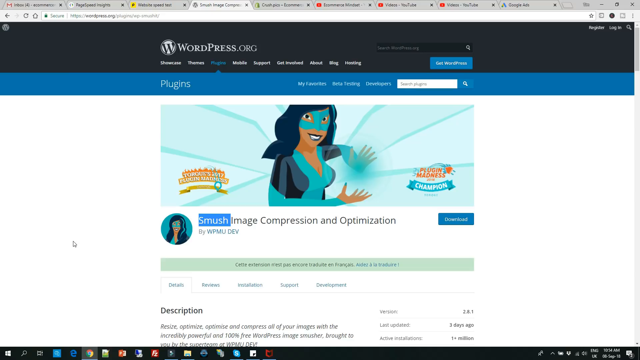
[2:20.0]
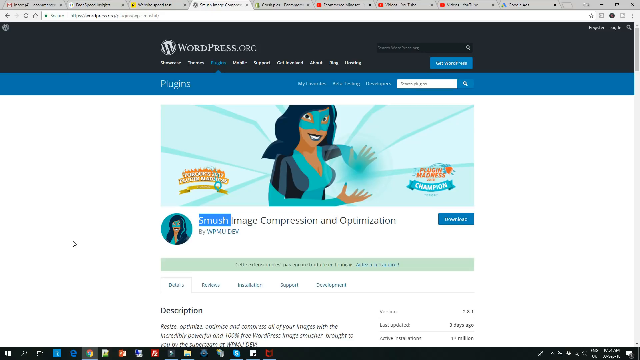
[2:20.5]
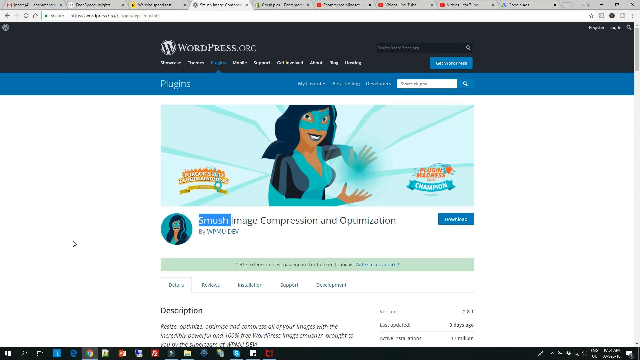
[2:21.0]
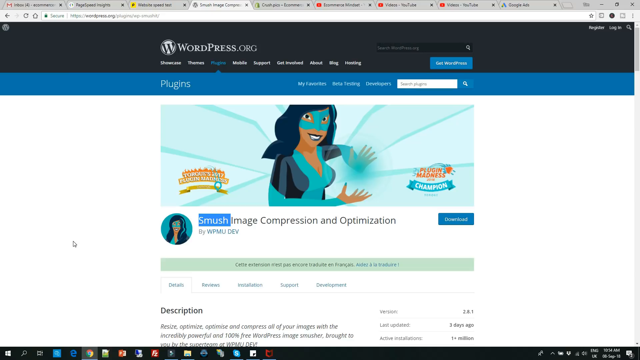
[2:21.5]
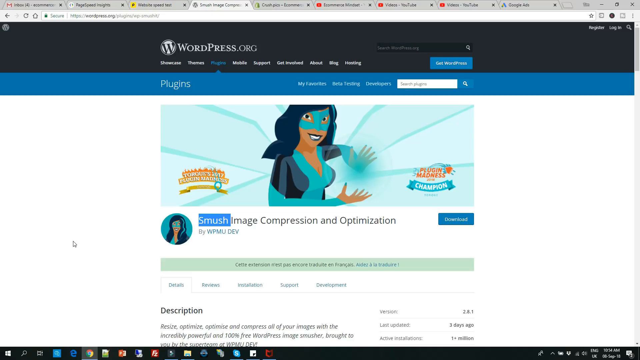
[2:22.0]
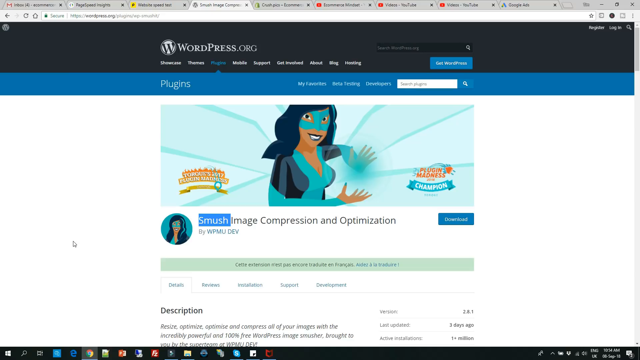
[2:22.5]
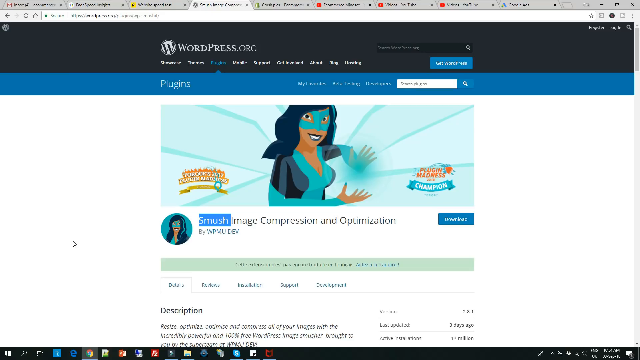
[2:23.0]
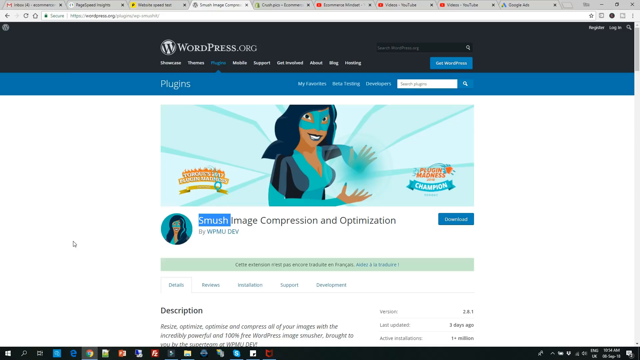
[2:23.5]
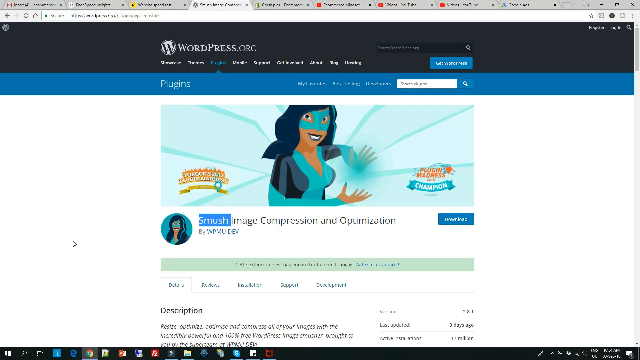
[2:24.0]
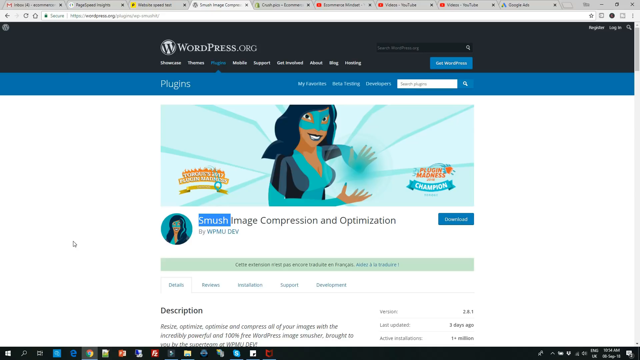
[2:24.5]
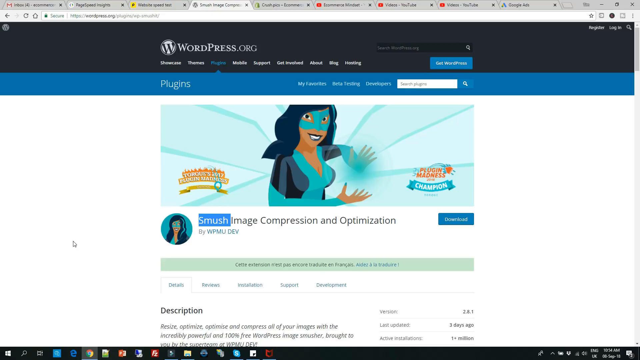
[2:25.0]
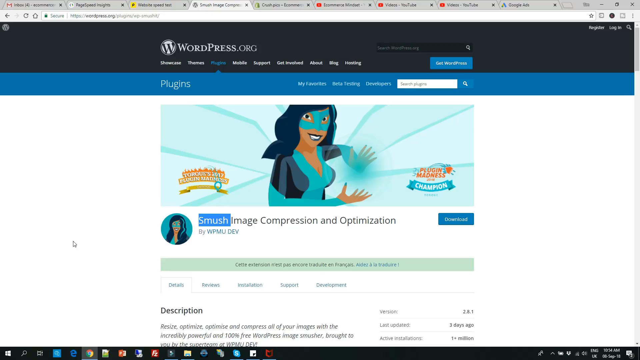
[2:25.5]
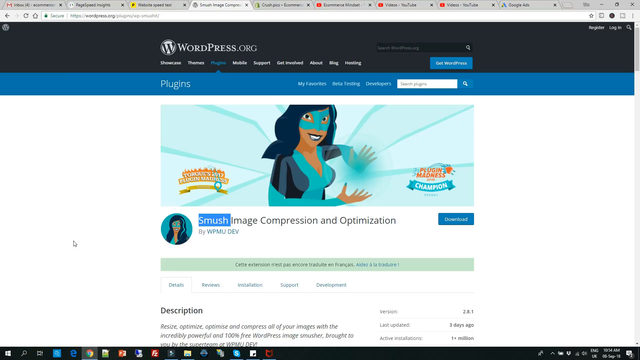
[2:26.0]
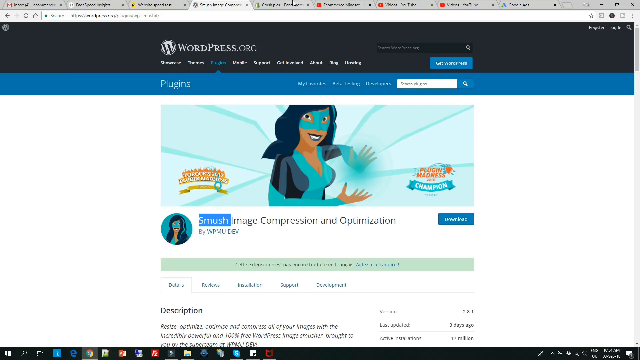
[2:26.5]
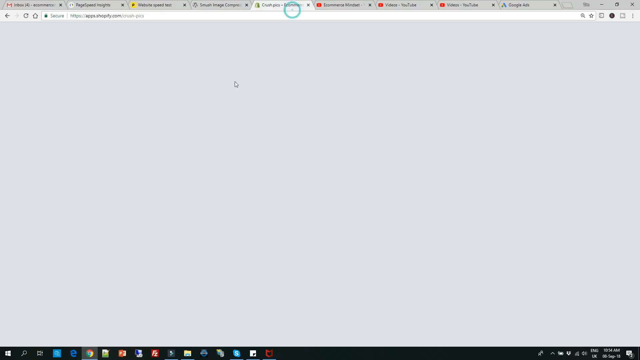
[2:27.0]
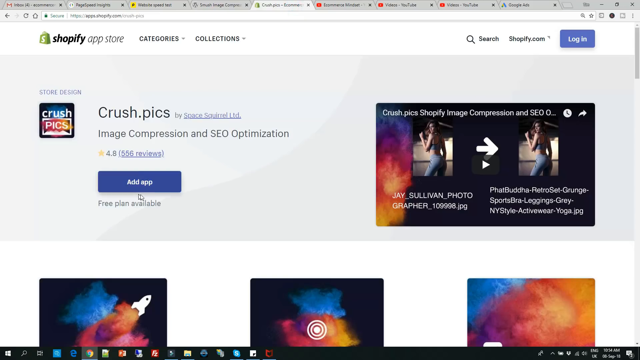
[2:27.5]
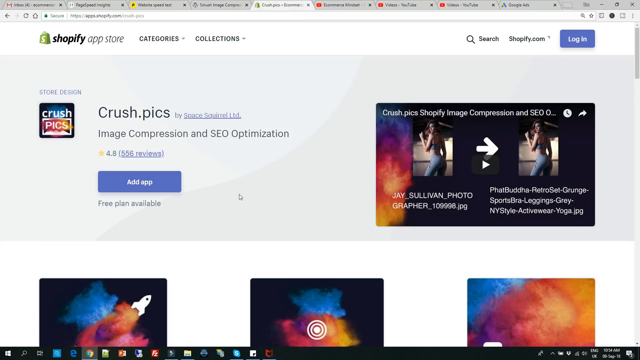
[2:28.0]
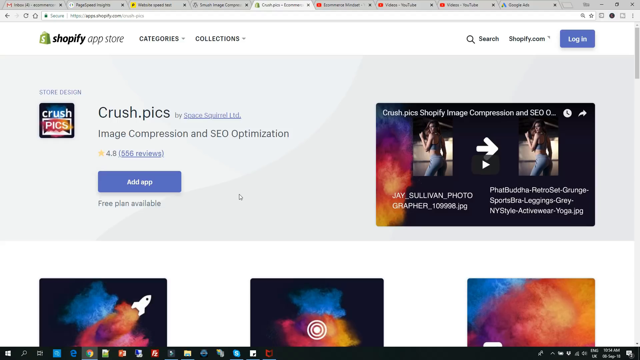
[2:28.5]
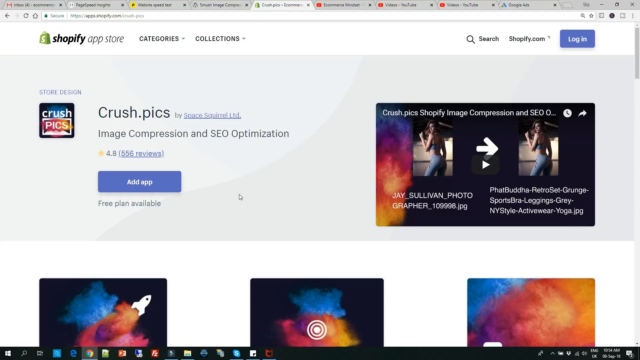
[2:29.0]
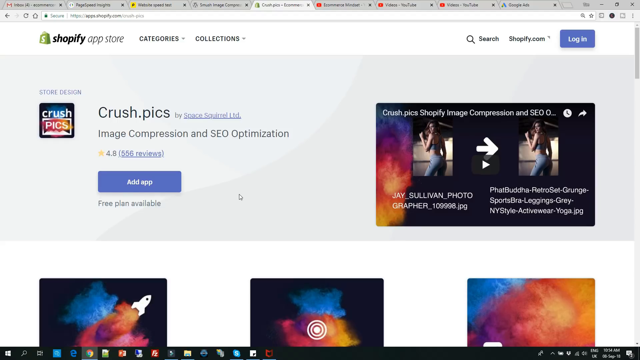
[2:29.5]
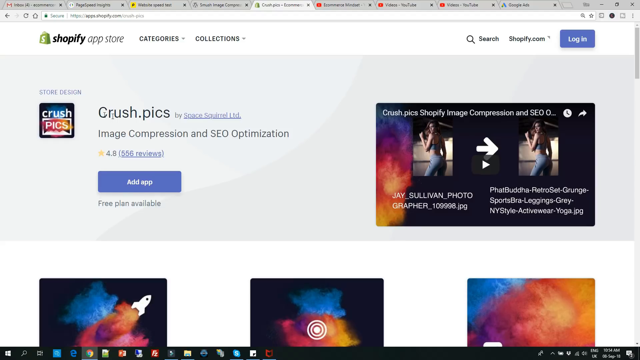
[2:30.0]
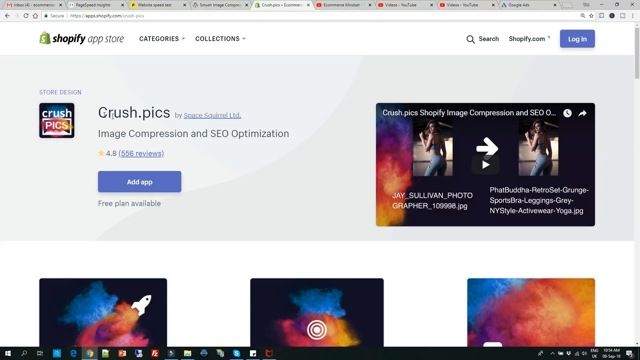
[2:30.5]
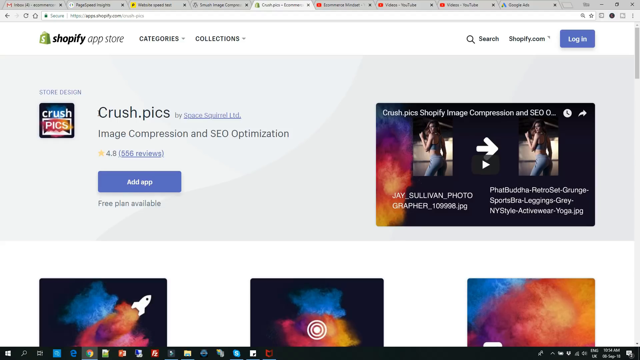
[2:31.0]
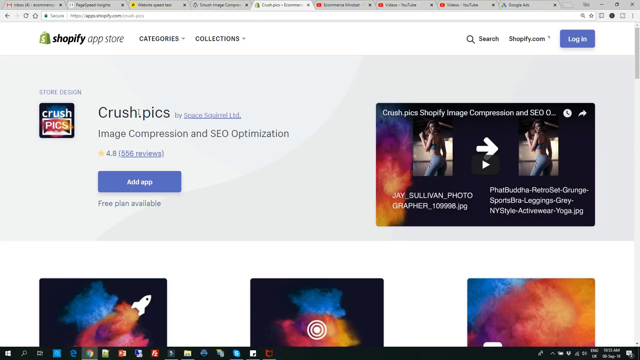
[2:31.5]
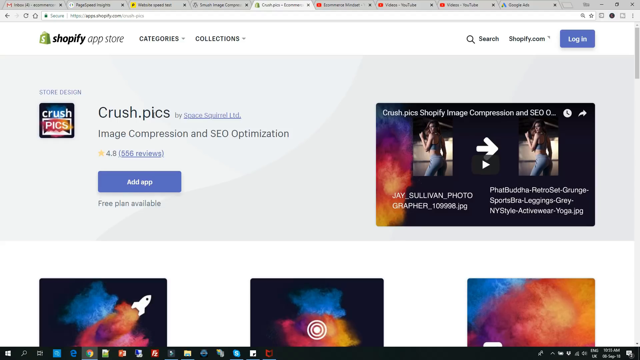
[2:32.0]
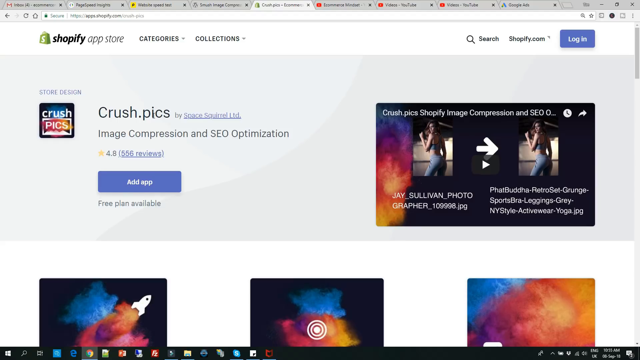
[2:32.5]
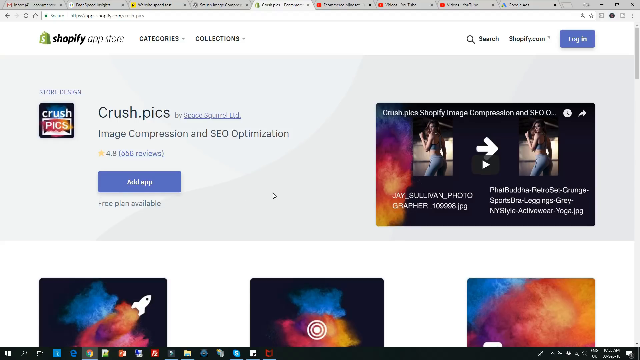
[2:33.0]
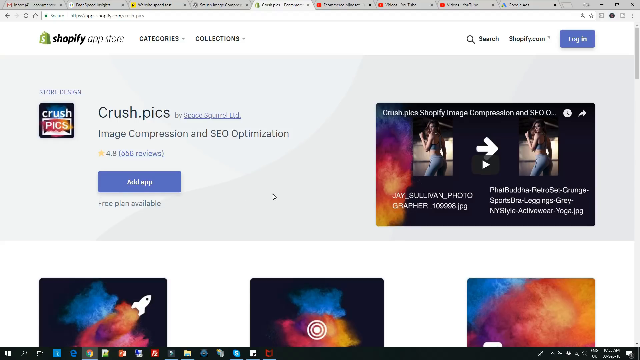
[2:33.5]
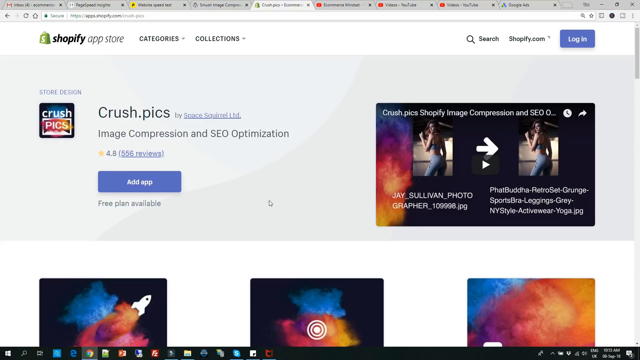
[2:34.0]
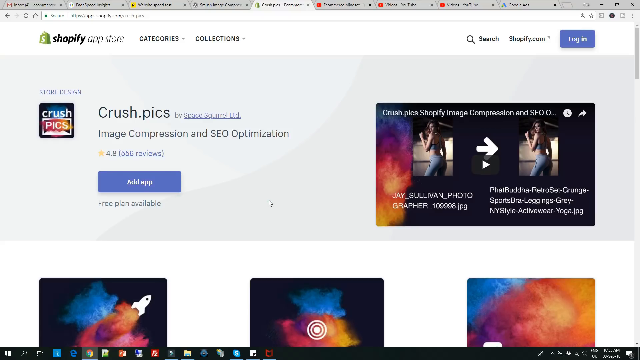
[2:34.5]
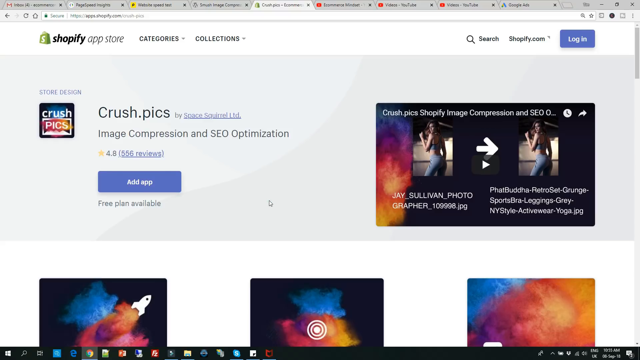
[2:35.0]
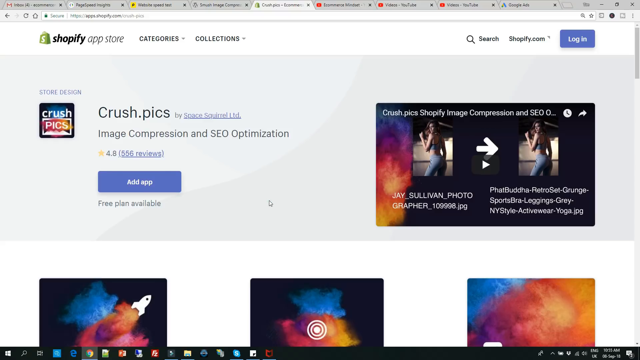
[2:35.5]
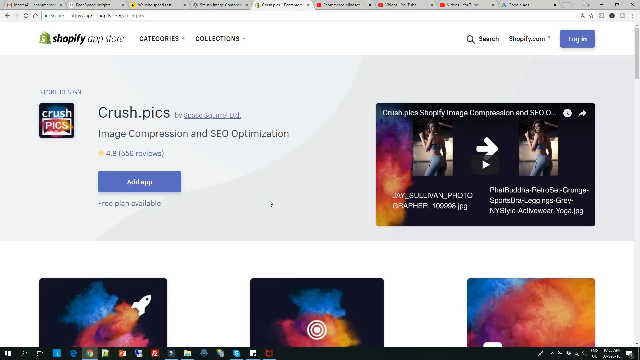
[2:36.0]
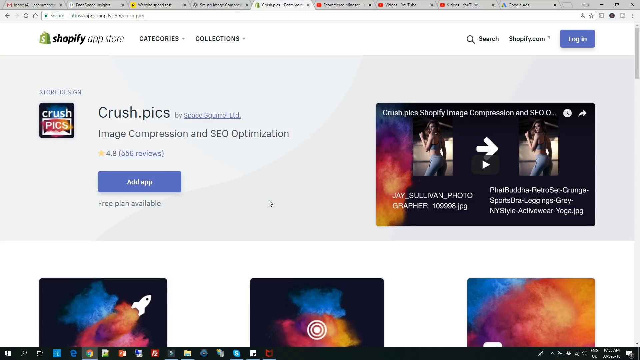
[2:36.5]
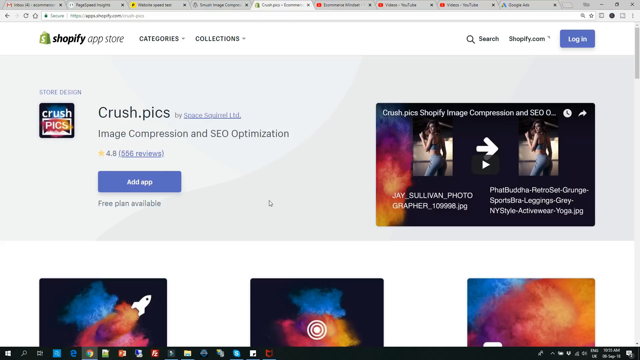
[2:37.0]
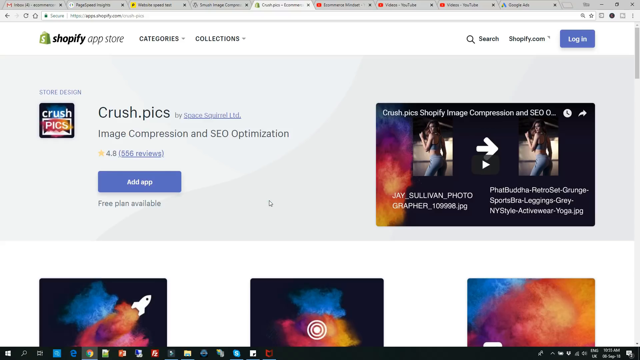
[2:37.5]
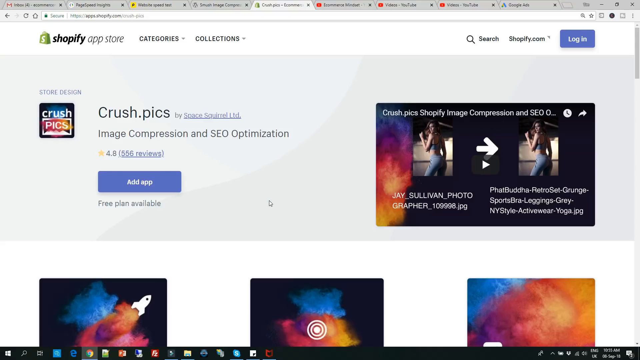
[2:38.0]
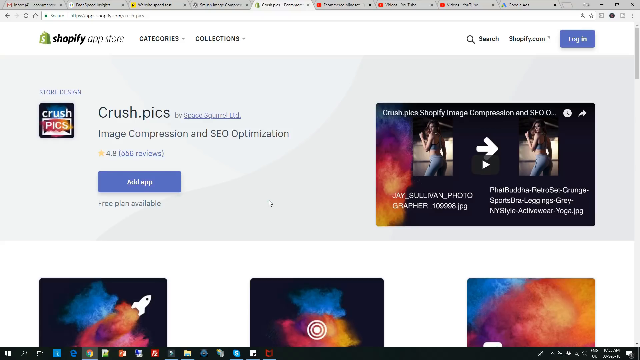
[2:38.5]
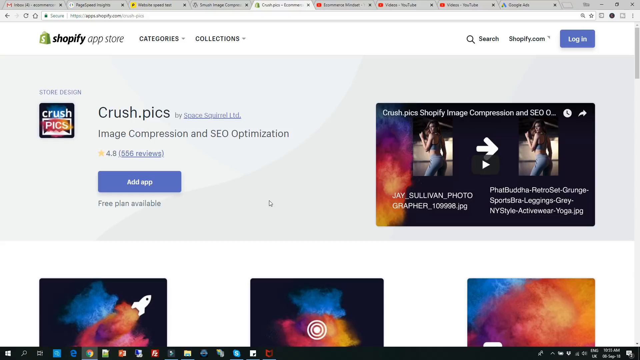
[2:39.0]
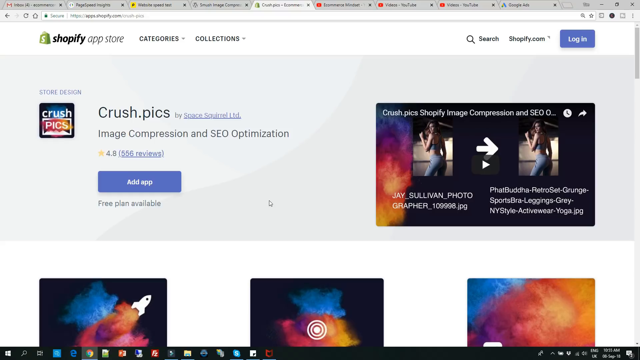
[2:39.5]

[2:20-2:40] Someone is on a computer with nine tabs open, now on a wordpress.org tab. The page mentions plugins, and the title reads "Smush image compression and optimization". The page has what looks like a small action hero or superhero, like an African American woman in a black and blue suit. Another page is then clicked: the Shopify app store, showing "CrushPix image compression and SEO optimization".